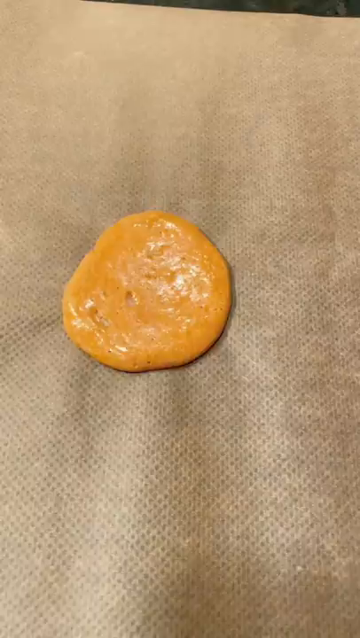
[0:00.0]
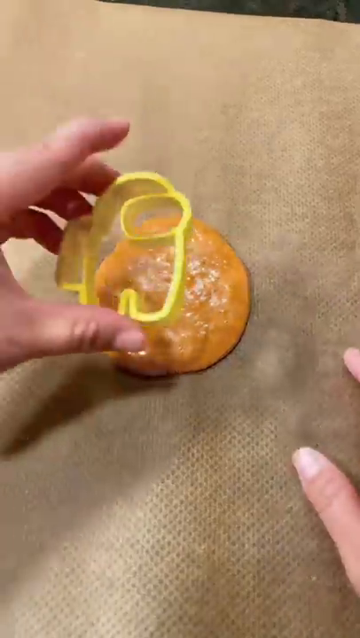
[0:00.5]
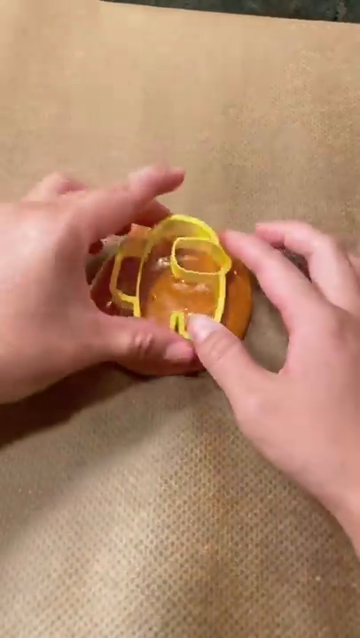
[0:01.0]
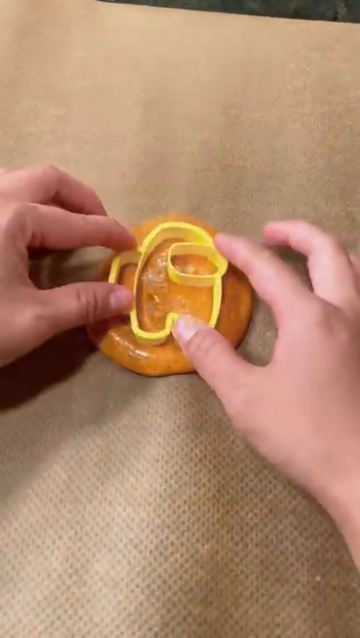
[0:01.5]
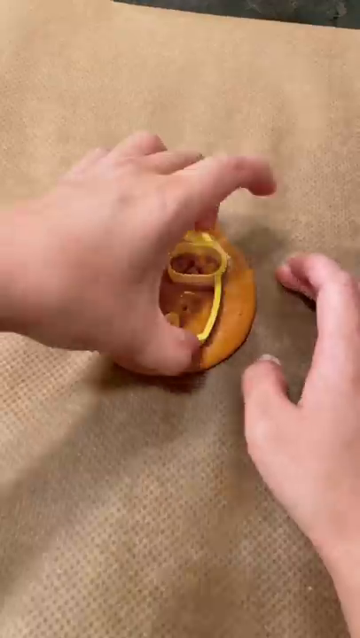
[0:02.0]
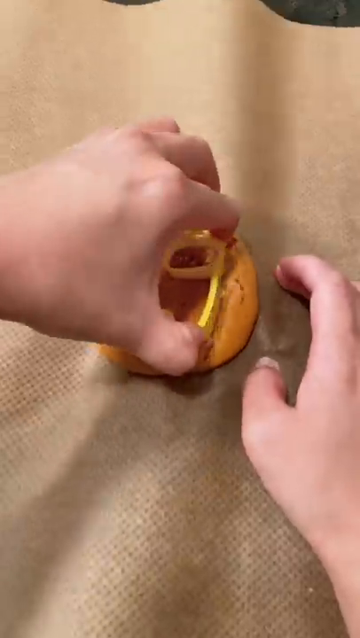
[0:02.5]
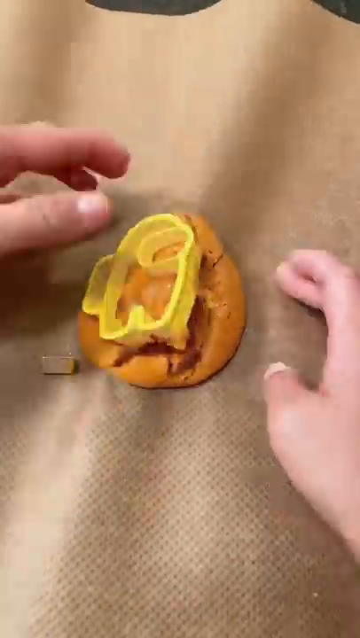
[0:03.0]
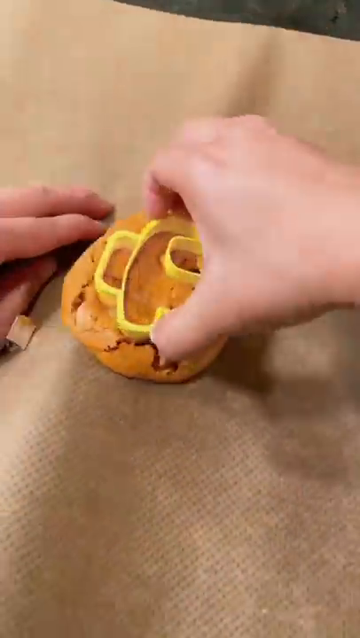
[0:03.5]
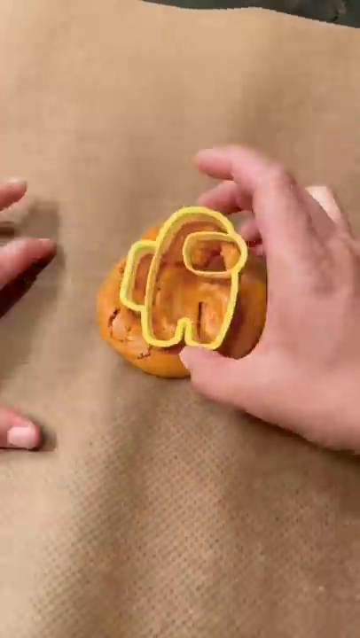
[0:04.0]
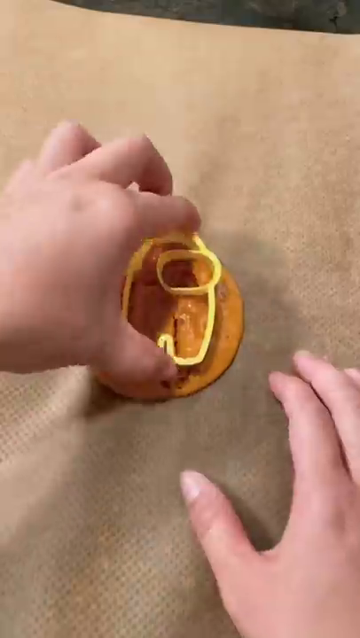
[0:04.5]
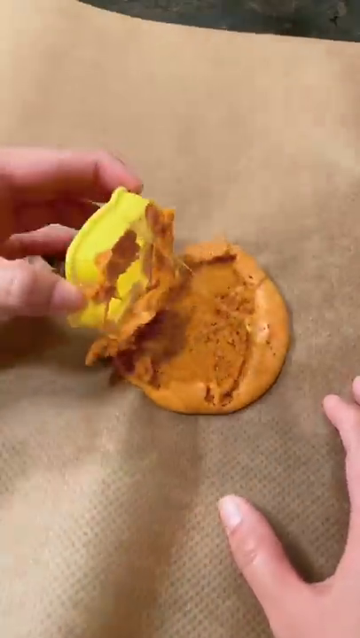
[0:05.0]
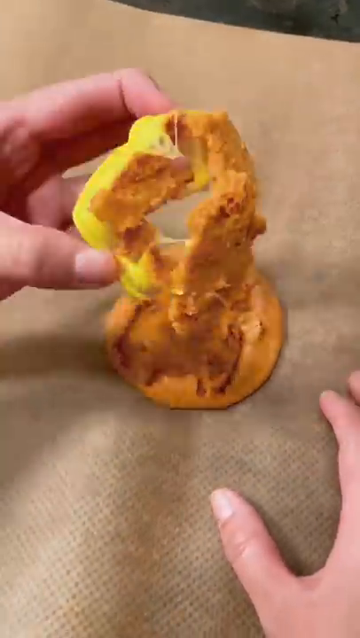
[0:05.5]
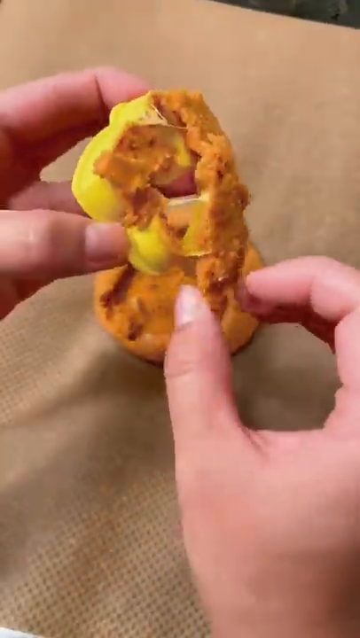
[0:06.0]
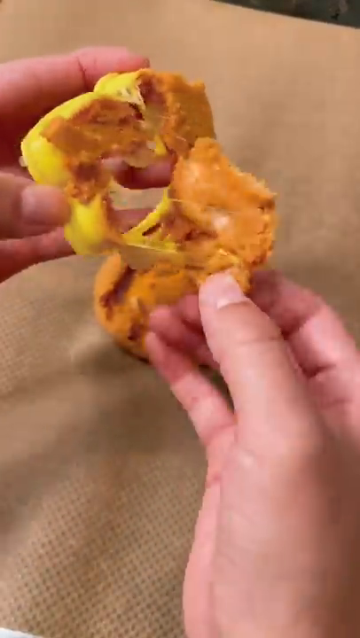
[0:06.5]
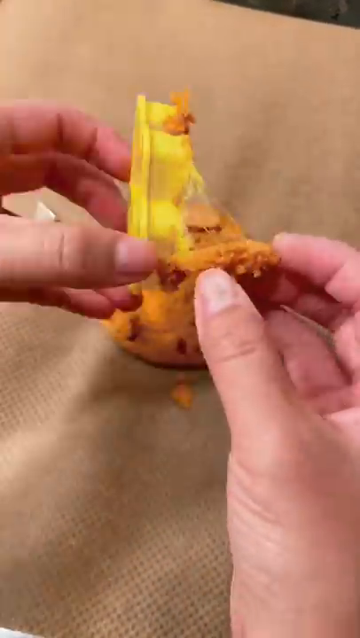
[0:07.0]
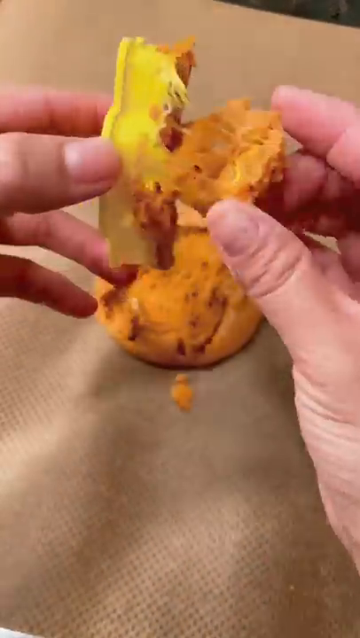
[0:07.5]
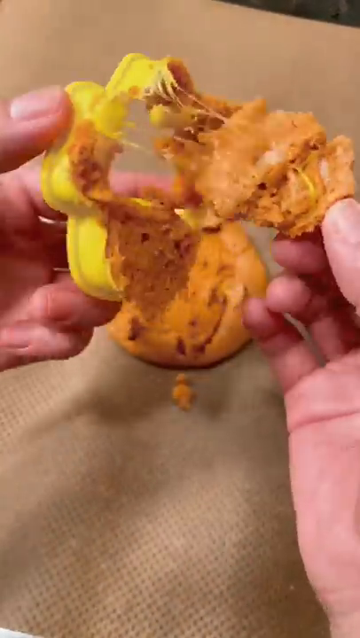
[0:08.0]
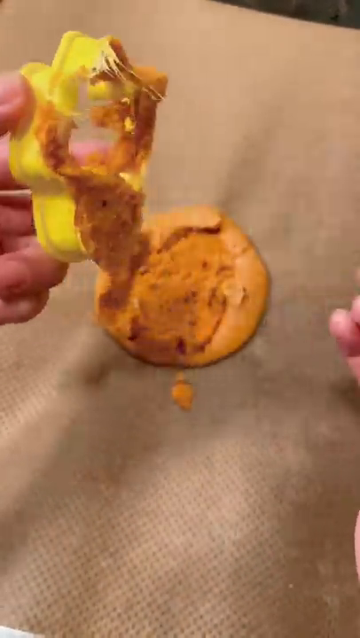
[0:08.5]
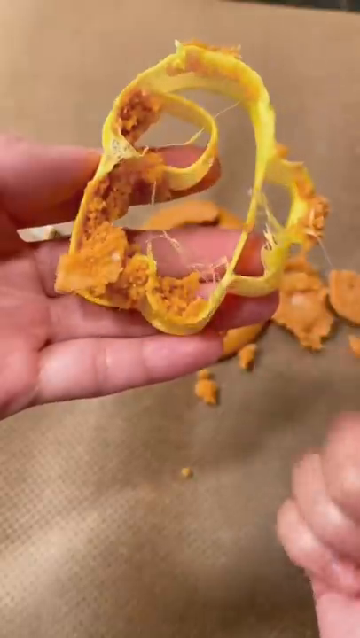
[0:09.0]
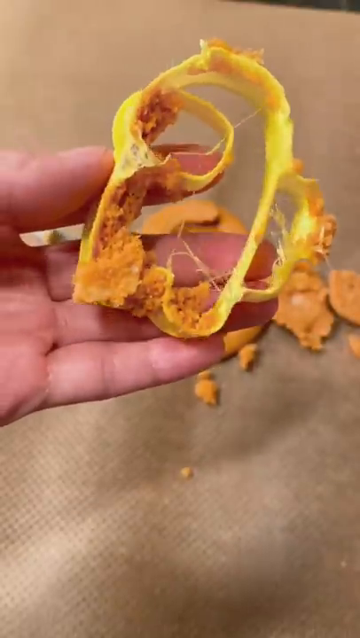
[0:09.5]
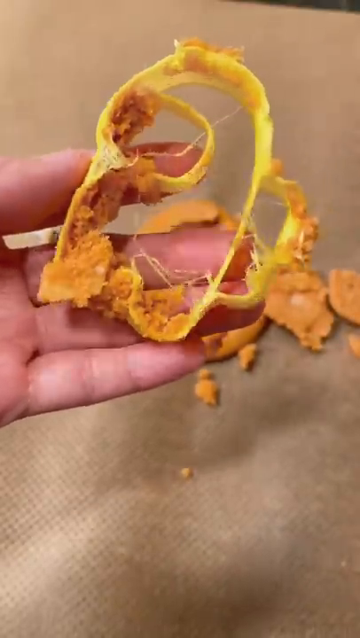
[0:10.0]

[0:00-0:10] A brown cloth, apparently a cloth table sheet, is seen from a camera pointed straight down. Two hands come in from the point of view of the camera, which may be mounted, toward a large cookie placed on the cloth. The hands produce a yellow cookie cutter, which looks like it is shaped like one of the video game characters from Among Us, and press it down into the cookie. As they try to pull it out, it has not worked: the cookie is mangled into the cookie cutter and has not been cut. The cookie cutter seems to have been melted by the heat of the hot cookie, unable to cut through it, and seems to start melting into the cookie itself as it is pulled out.